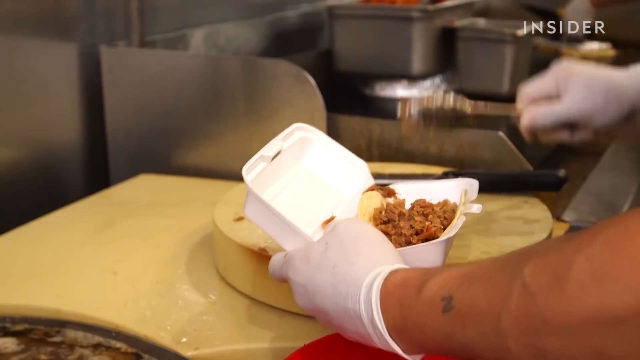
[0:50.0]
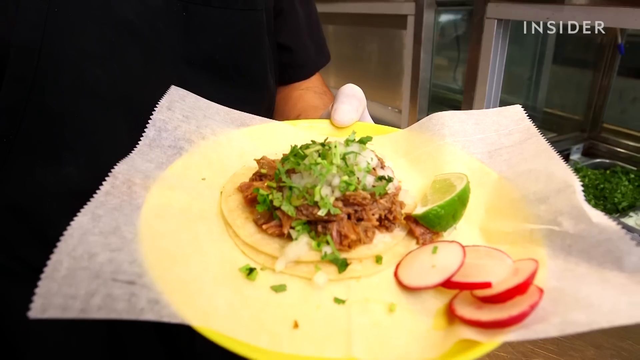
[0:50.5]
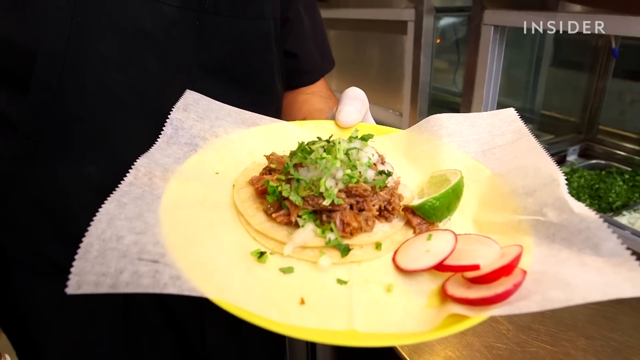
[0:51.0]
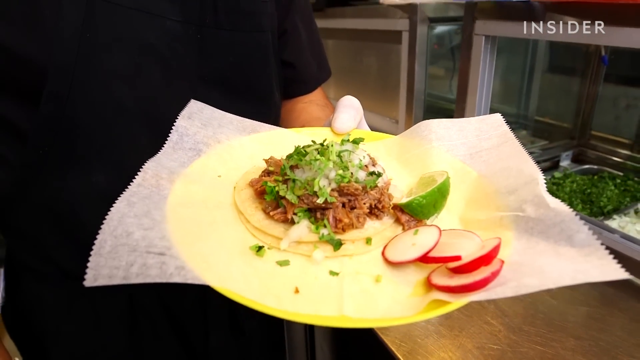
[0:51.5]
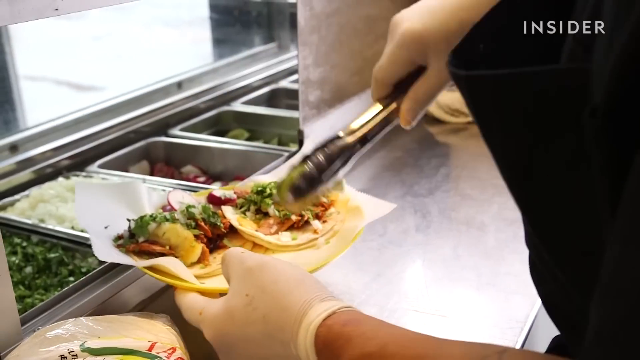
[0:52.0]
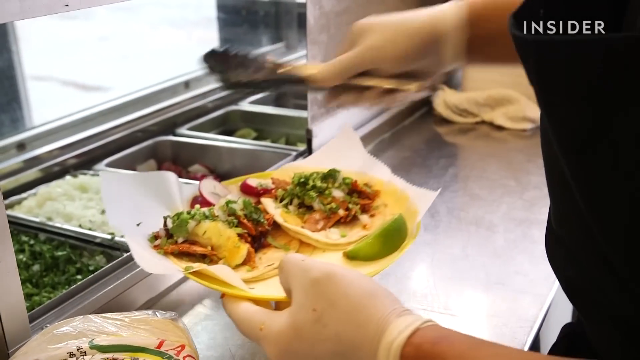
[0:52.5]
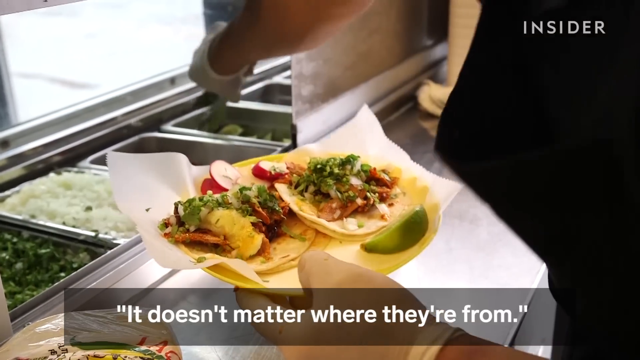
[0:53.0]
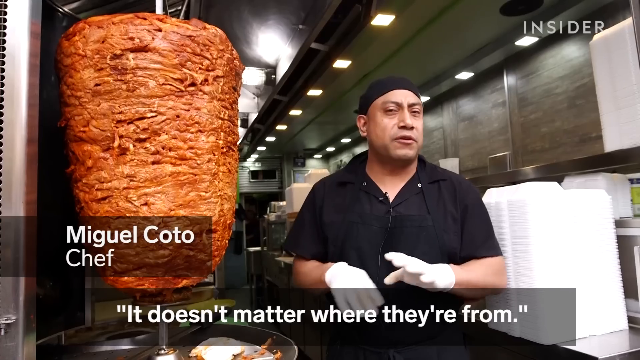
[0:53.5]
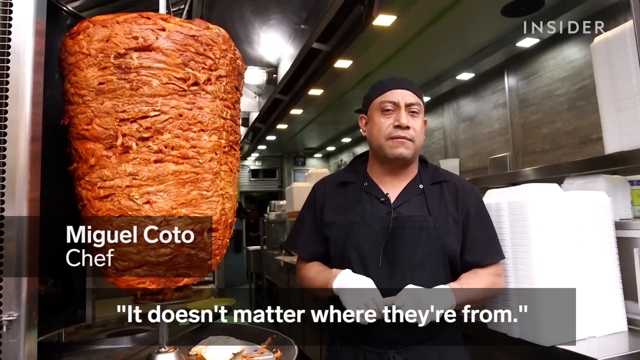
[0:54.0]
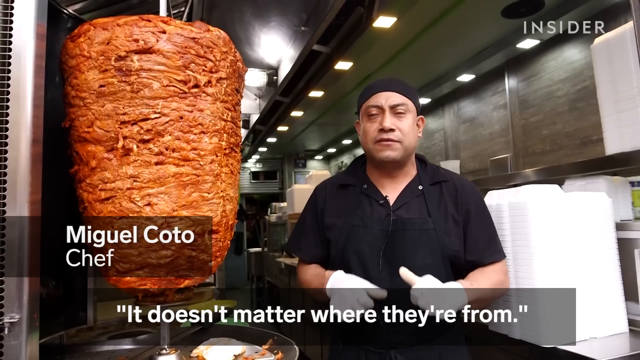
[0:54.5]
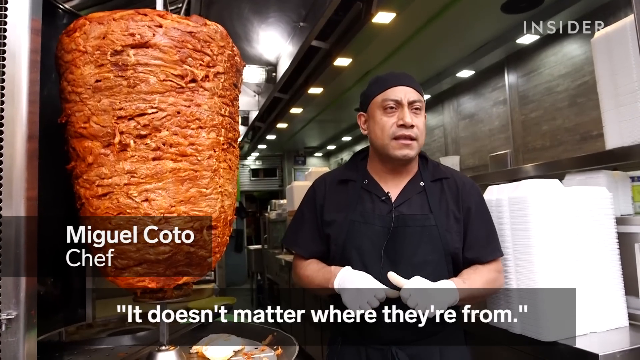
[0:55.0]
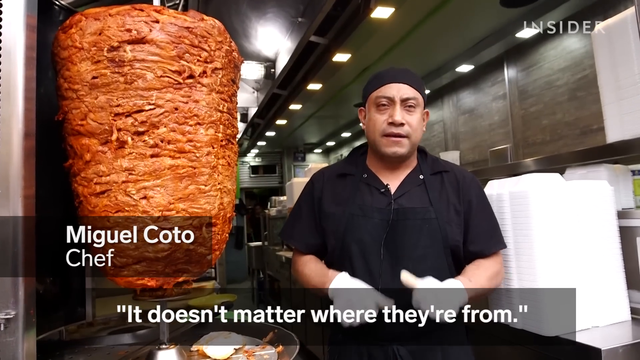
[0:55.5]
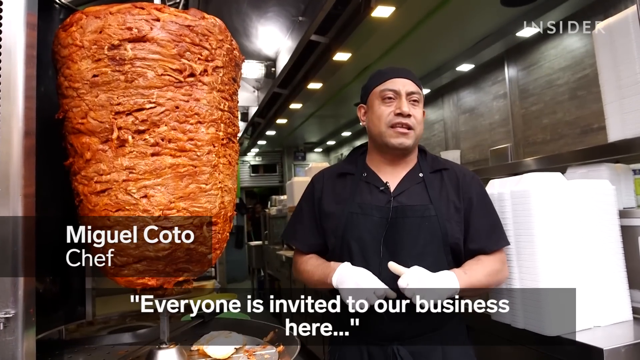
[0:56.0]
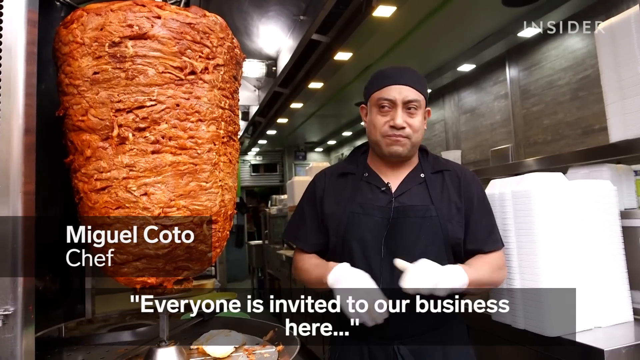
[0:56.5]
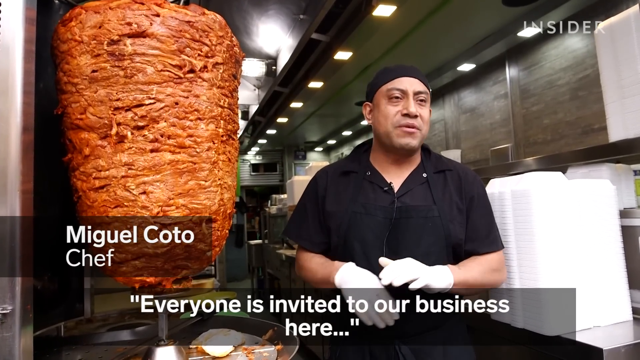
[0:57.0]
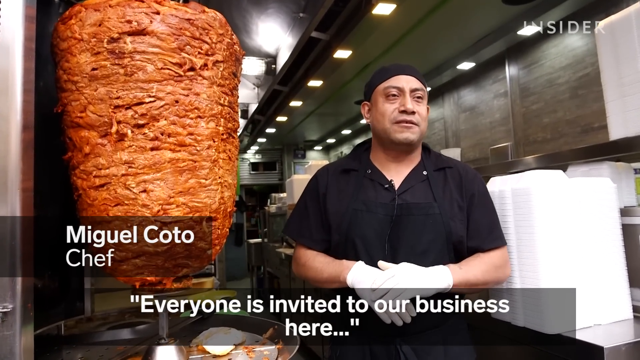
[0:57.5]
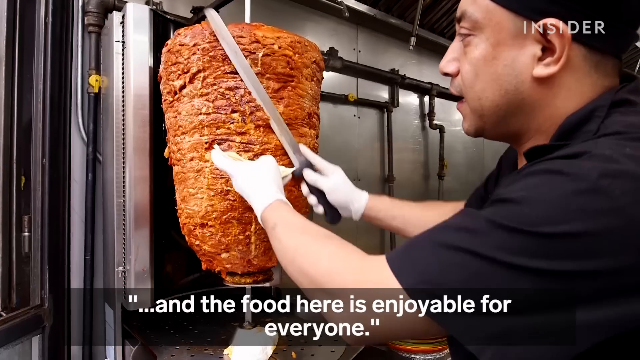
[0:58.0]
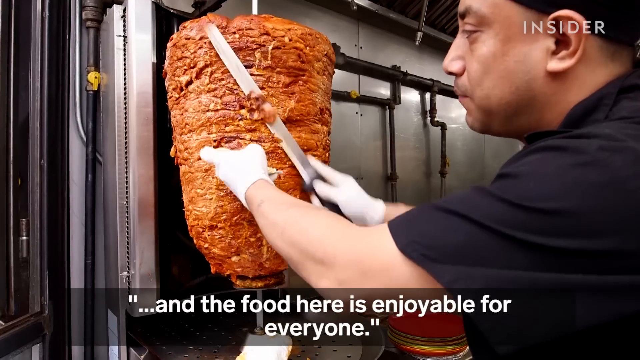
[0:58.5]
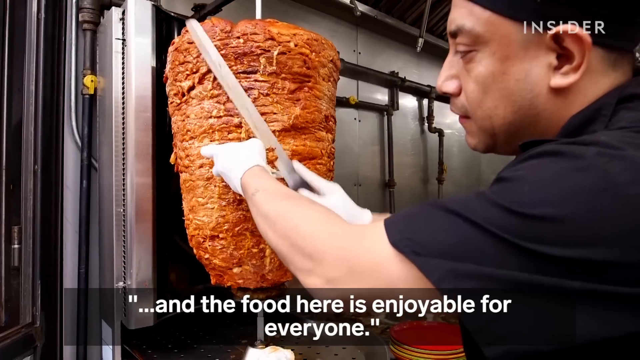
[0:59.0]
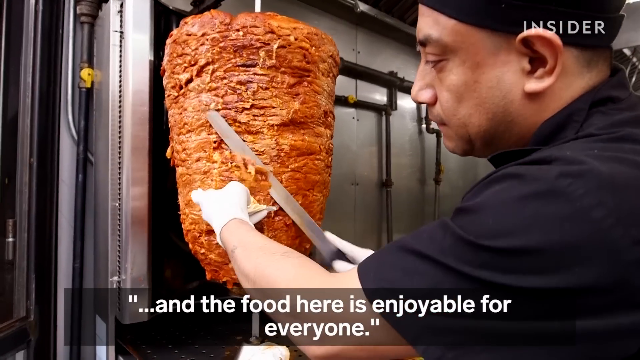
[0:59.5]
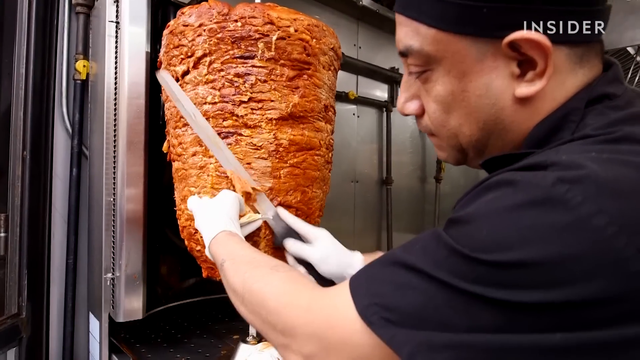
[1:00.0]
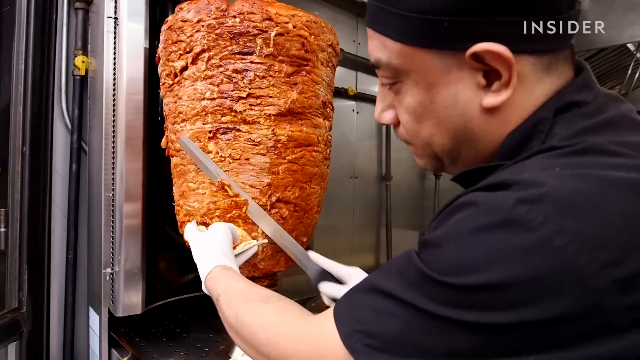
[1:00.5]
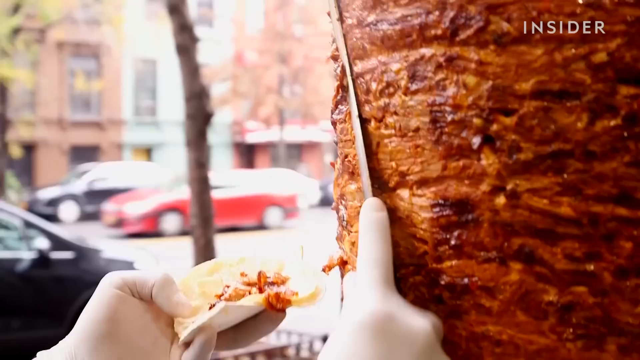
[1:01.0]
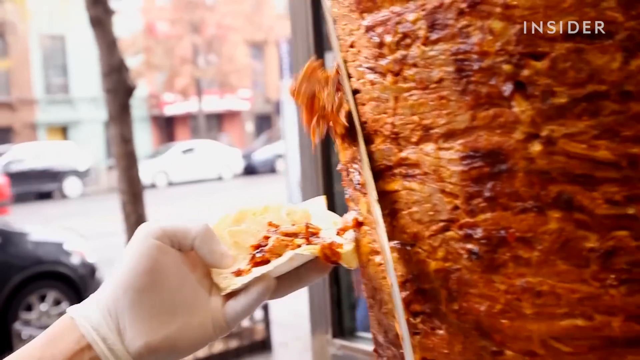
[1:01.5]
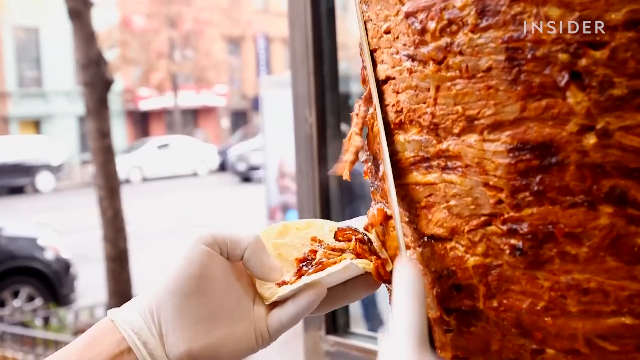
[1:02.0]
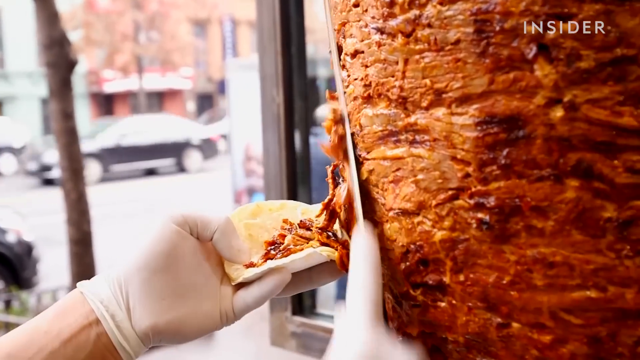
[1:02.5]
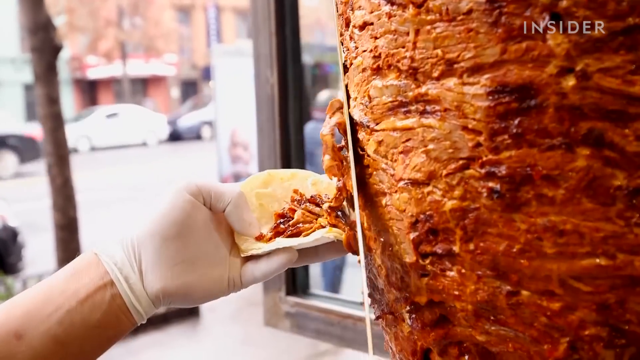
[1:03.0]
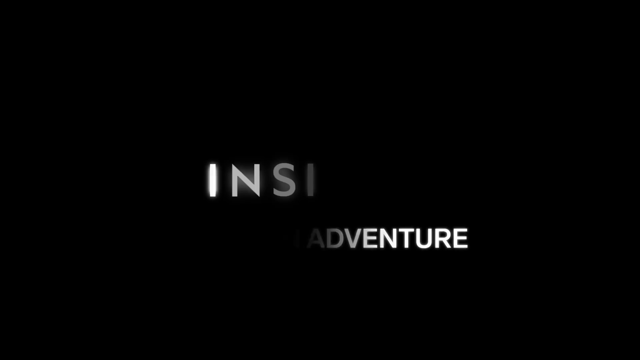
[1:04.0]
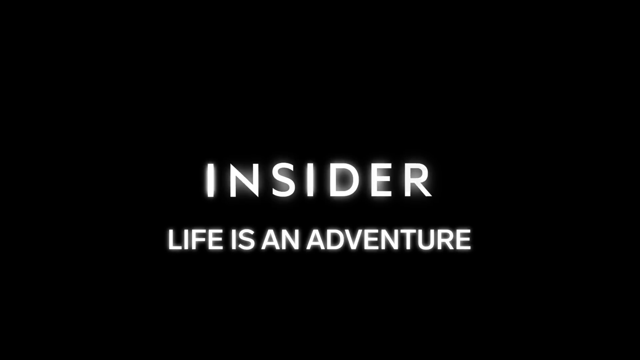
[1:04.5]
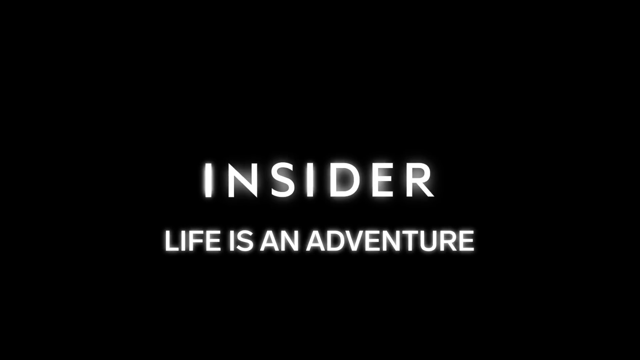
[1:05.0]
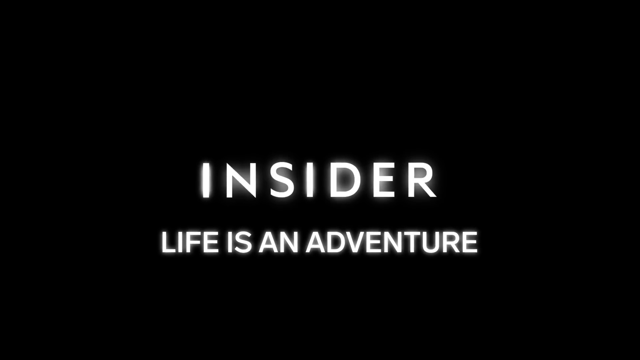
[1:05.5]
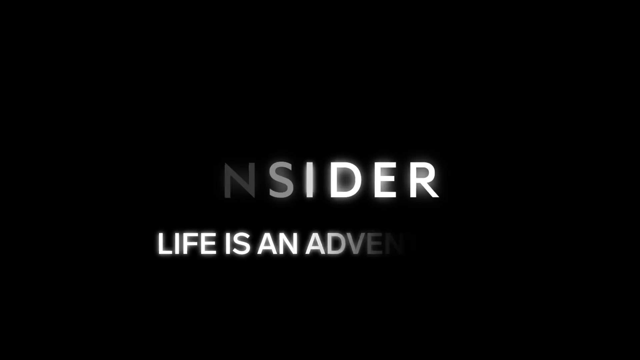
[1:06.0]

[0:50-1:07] Food is added to the takeout container, and a plate looks fully plated with many little corn tortillas holding mini tacos, apparently a few different small tacos. A slice of lime is put on the plate at the very end, with radish slices on the side. Miguel Coto, who says he is the chef, is shown; he is the man who has been slicing the pork onto the corn tortillas from the beginning. He talks and gestures, wearing white gloves, a black T-shirt, and a black hat covering his hair. He slices more of the pork onto a tortilla. He is clearly older than the owner and looks to be of Spanish or Mexican origin. The video finishes with a black screen and the text "insider, life is an adventure," which fades away.